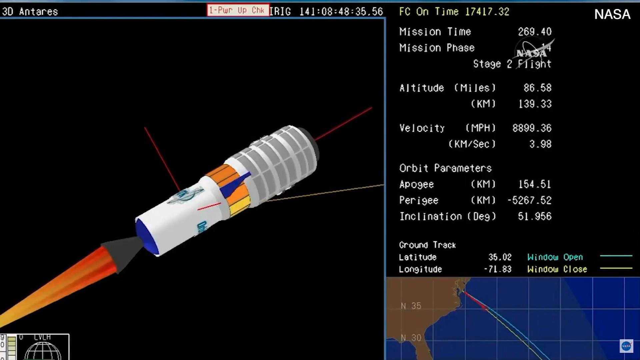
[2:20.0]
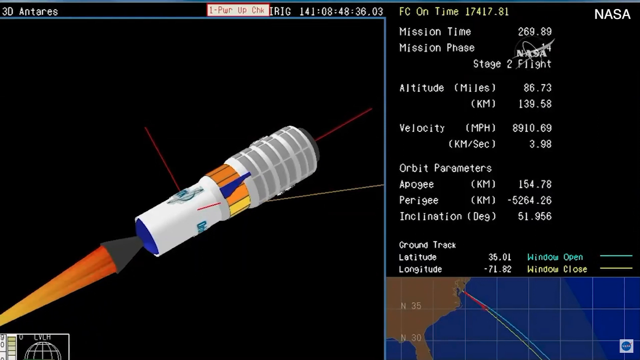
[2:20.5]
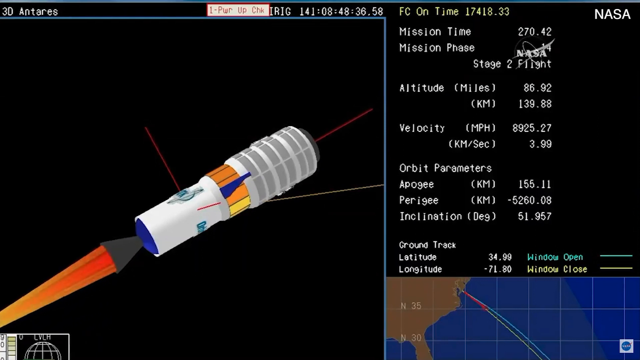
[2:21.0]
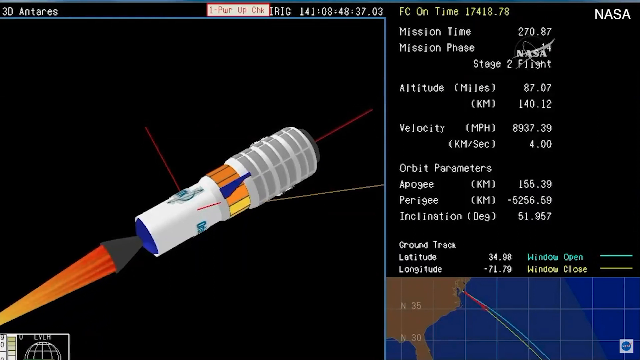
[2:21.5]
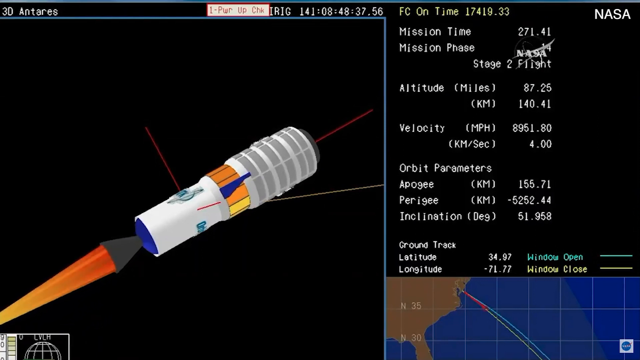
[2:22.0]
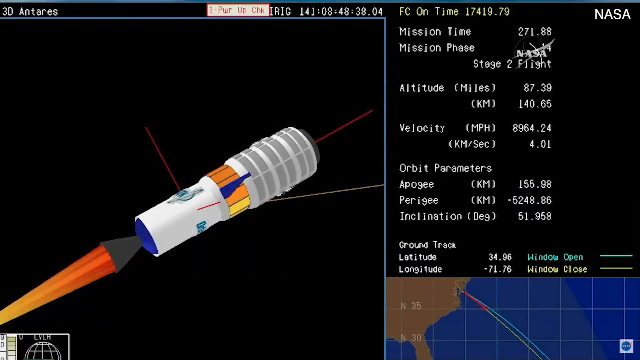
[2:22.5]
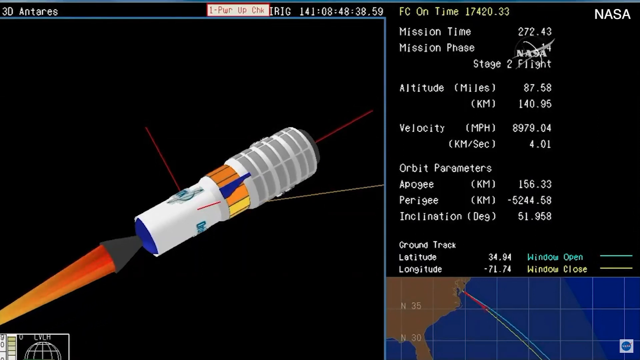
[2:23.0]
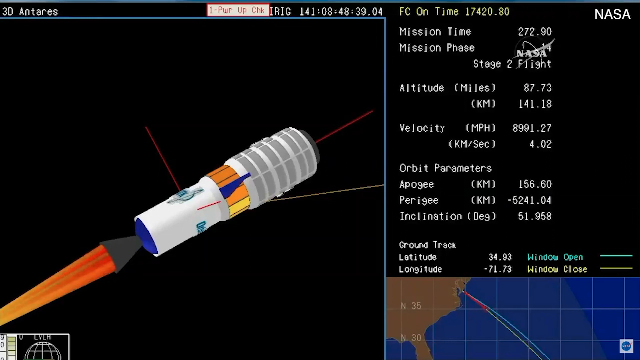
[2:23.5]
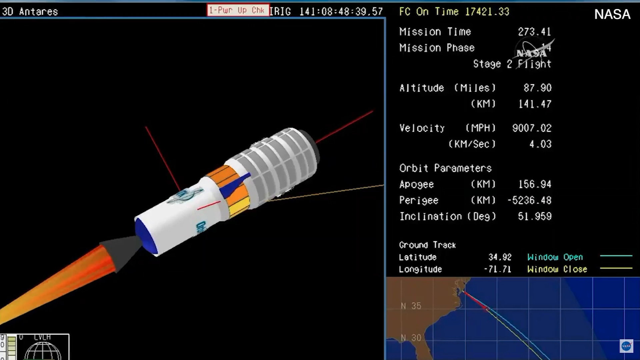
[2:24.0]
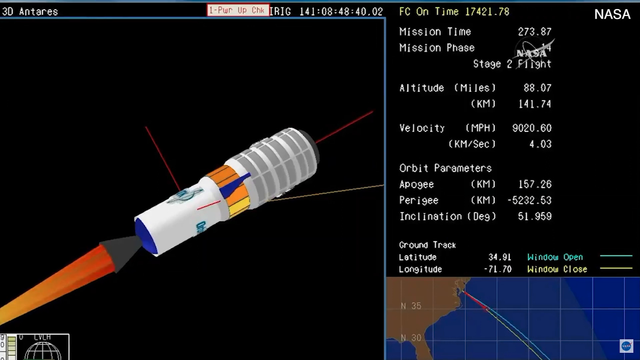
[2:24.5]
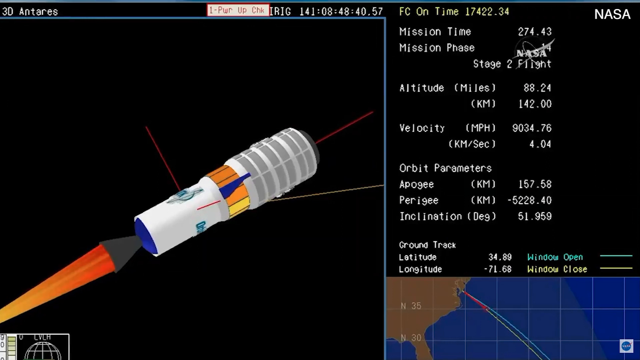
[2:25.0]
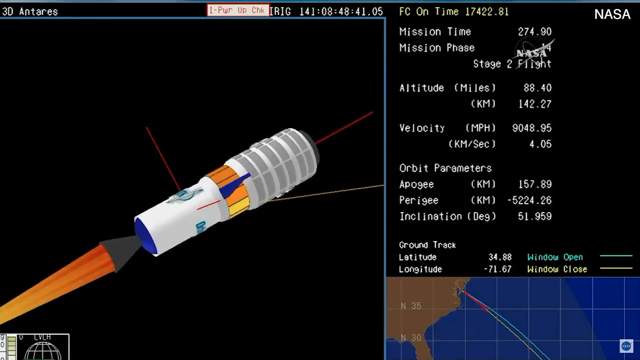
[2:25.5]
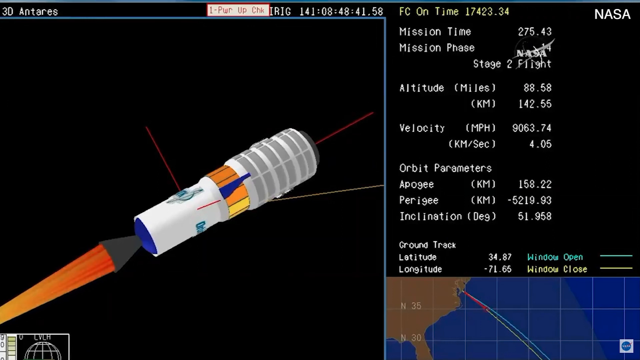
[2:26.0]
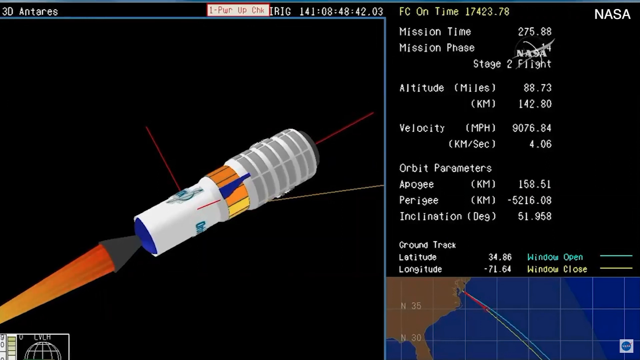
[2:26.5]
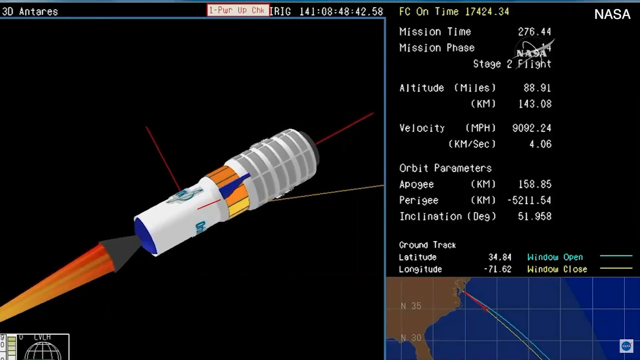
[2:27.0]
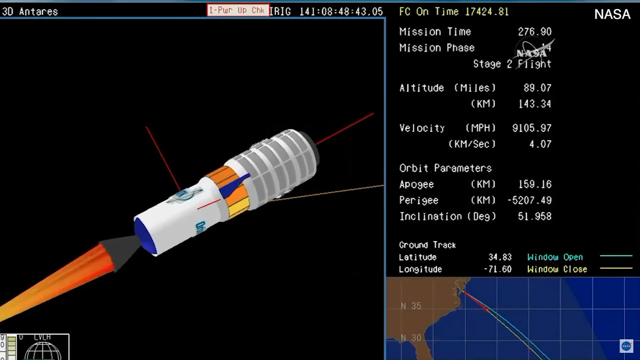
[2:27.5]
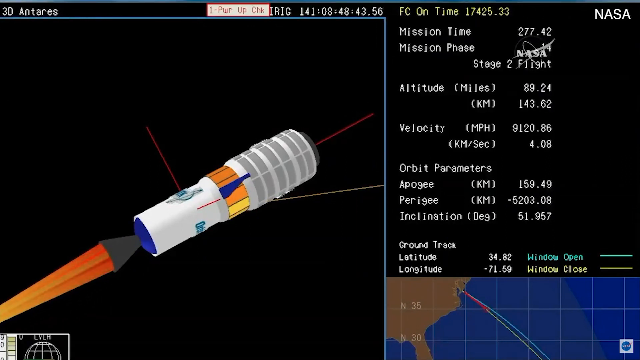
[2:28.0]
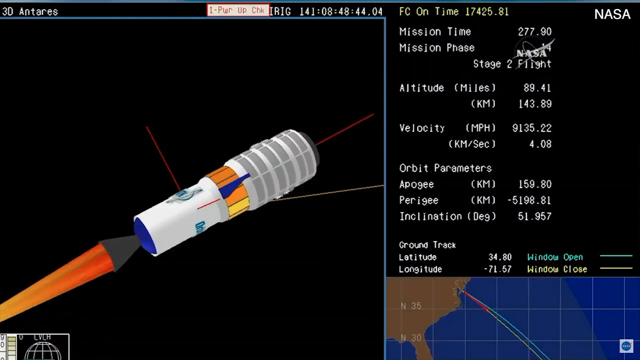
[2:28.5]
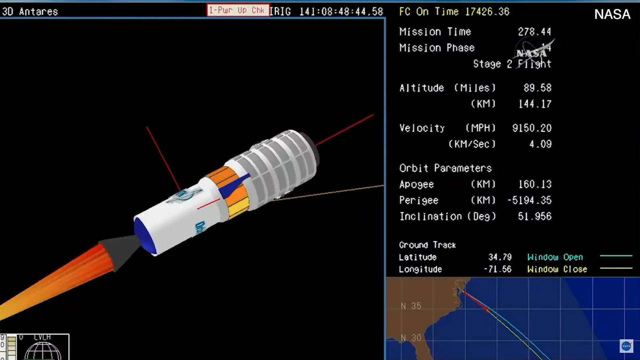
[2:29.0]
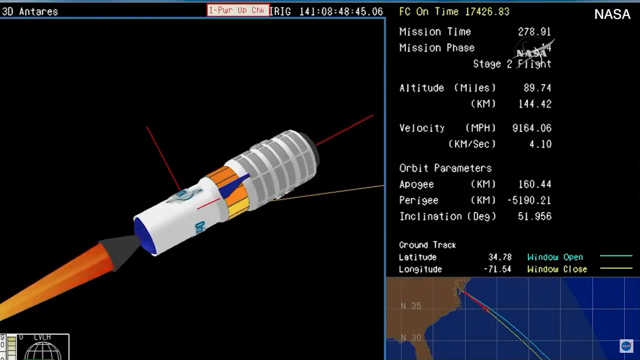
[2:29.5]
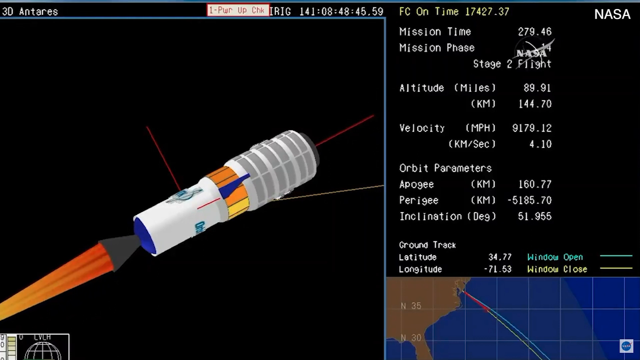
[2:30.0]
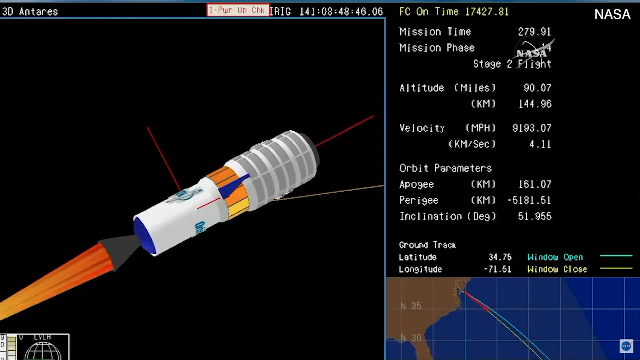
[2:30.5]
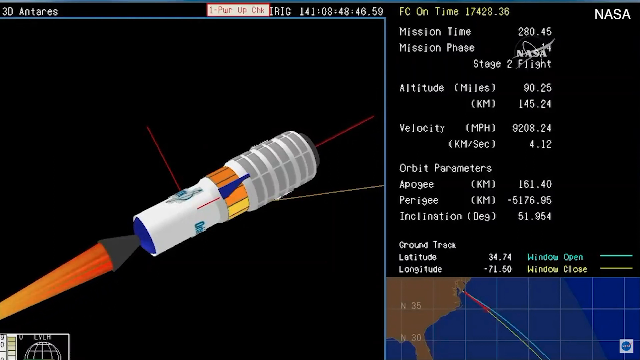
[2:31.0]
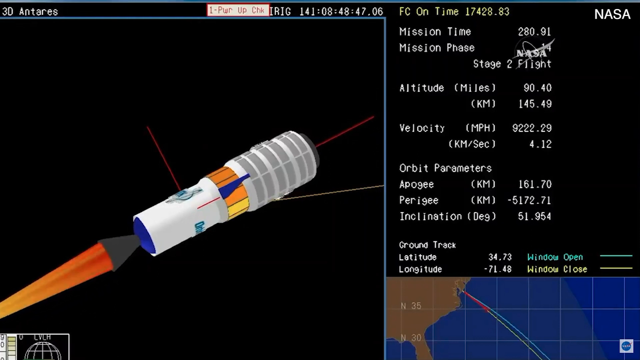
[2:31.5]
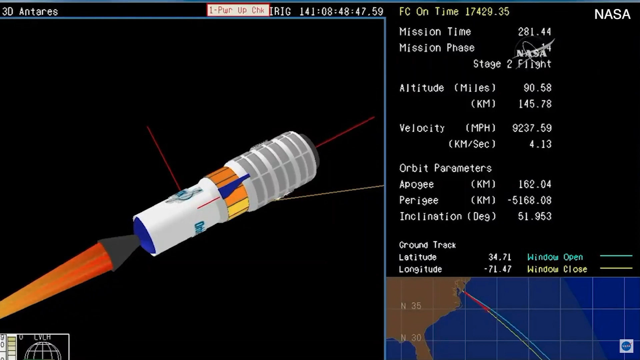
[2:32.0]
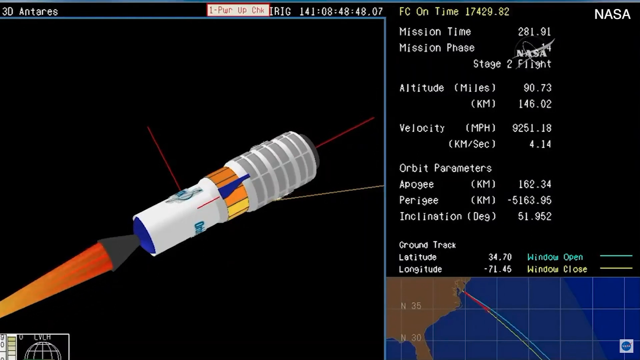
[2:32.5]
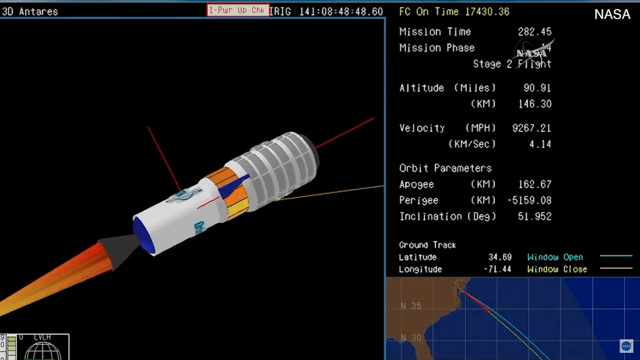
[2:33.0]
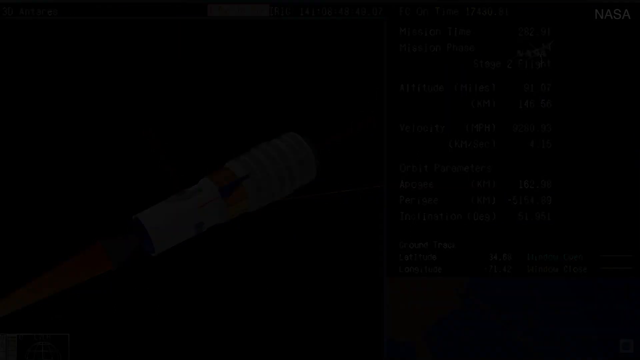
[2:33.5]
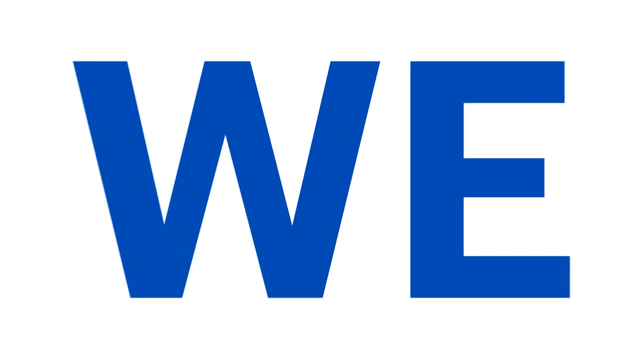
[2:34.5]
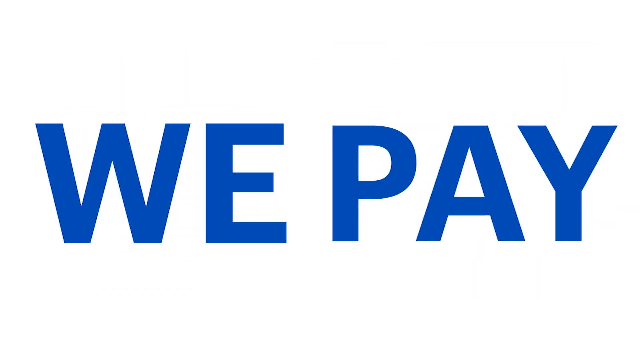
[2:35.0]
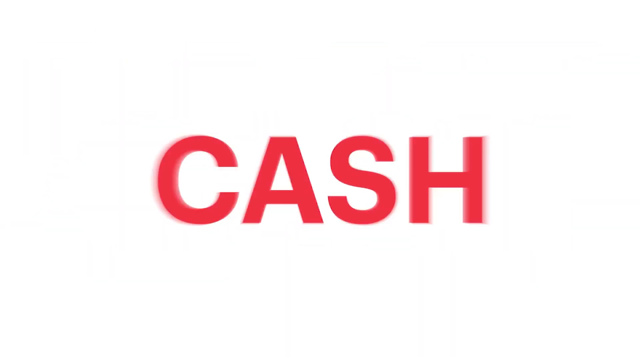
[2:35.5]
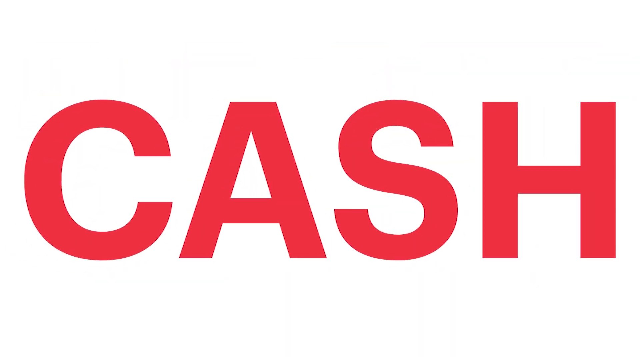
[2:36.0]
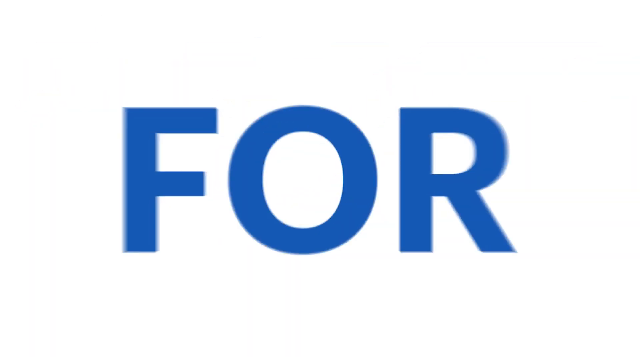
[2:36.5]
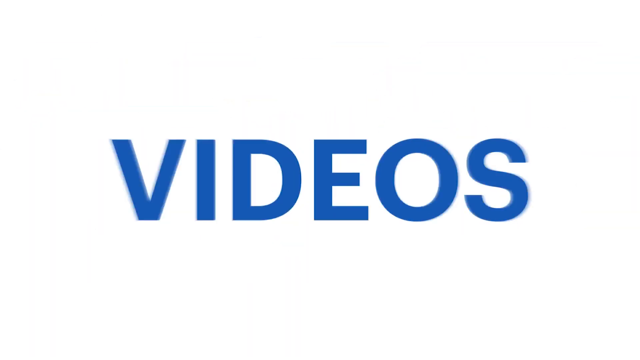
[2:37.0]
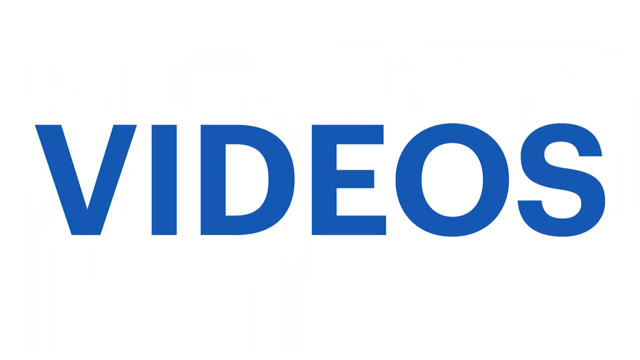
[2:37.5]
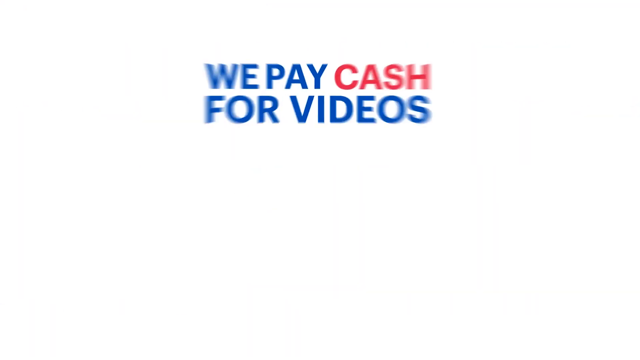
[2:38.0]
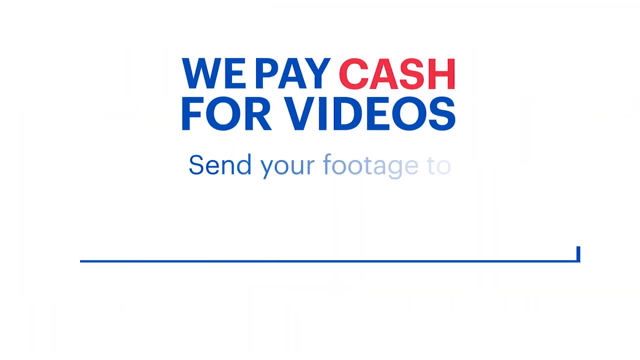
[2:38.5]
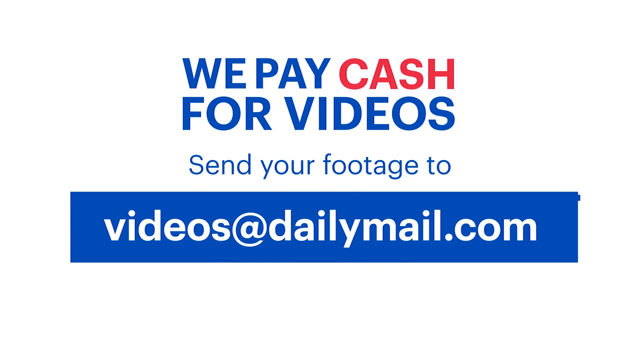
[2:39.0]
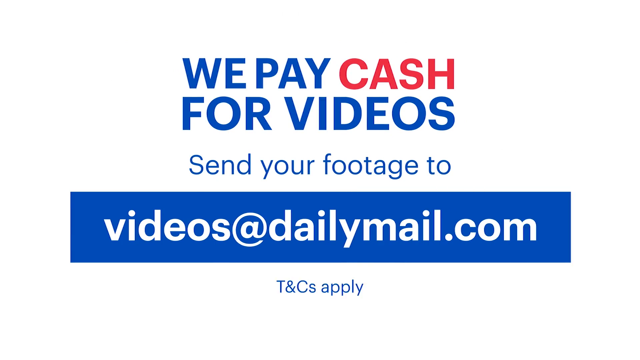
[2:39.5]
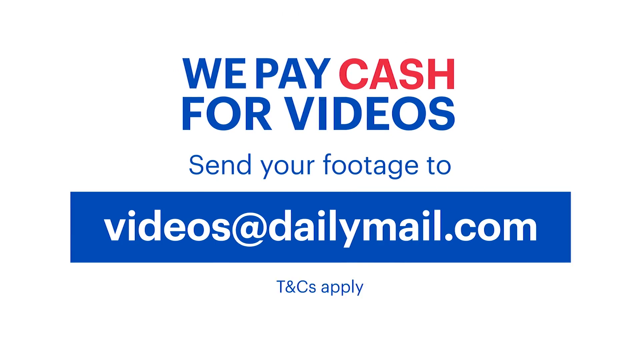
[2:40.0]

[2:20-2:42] A sign is on one side of the rocket as it moves. The rocket has blue, orange and white areas. On-screen text invites viewers to send in their video footage, indicating that cash will be paid for submitted videos. The rocket is then shown with various parameters presented in quantitative form.